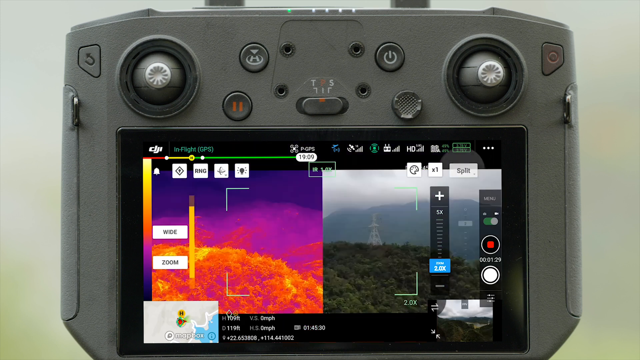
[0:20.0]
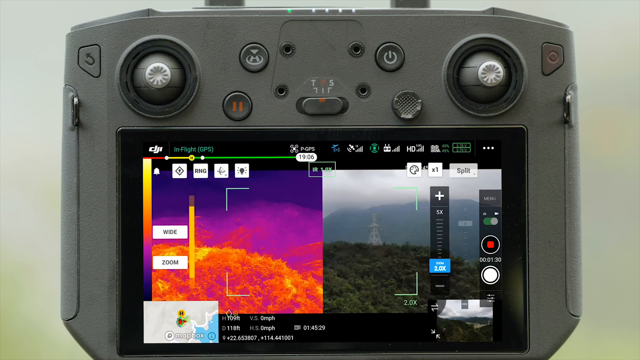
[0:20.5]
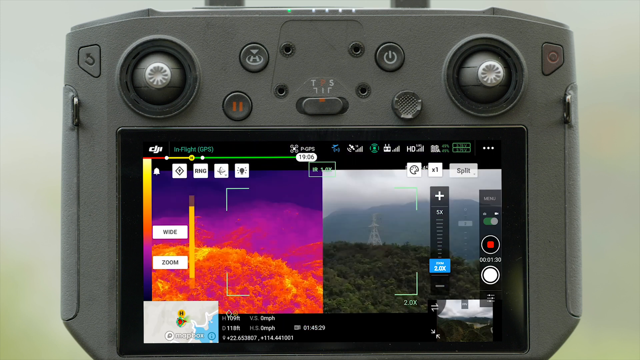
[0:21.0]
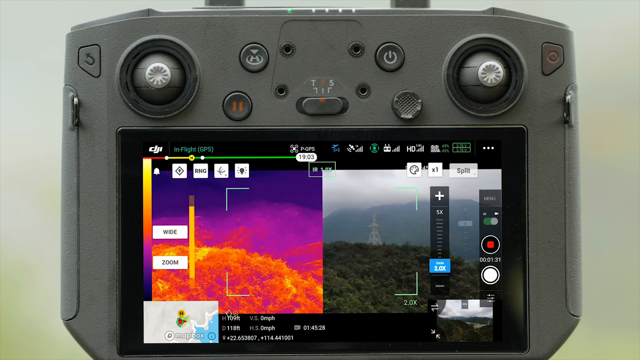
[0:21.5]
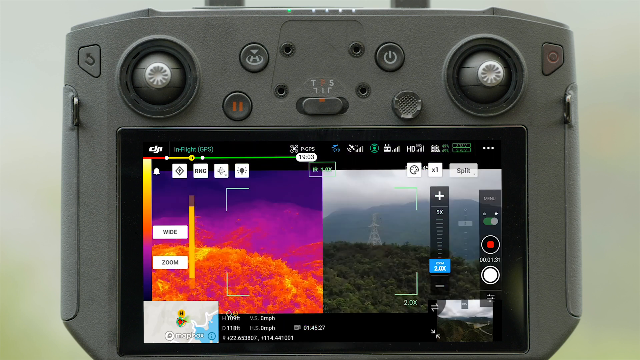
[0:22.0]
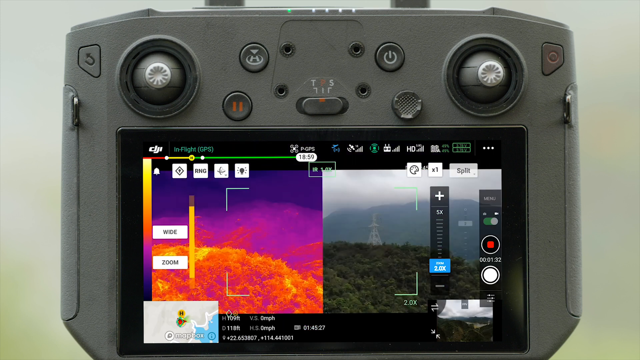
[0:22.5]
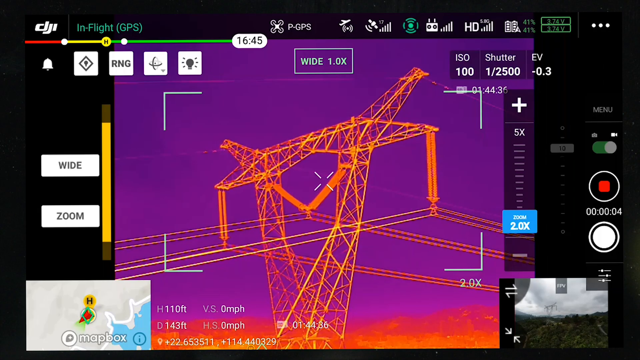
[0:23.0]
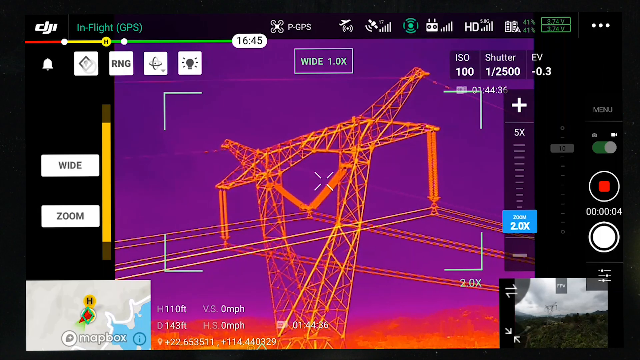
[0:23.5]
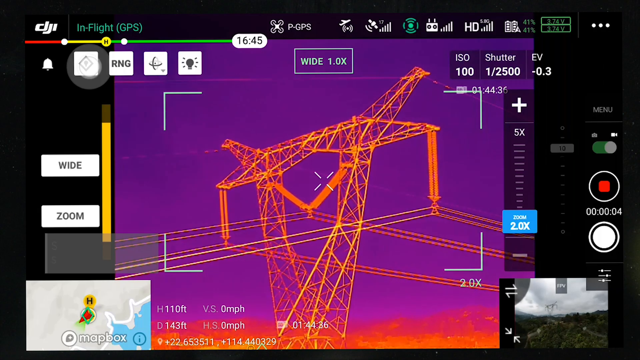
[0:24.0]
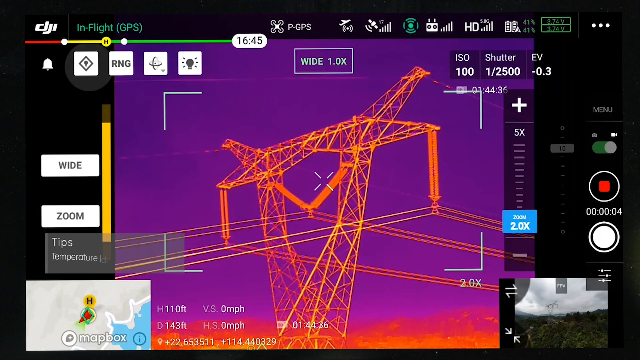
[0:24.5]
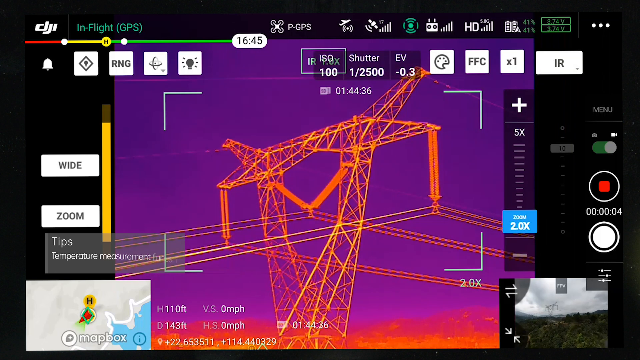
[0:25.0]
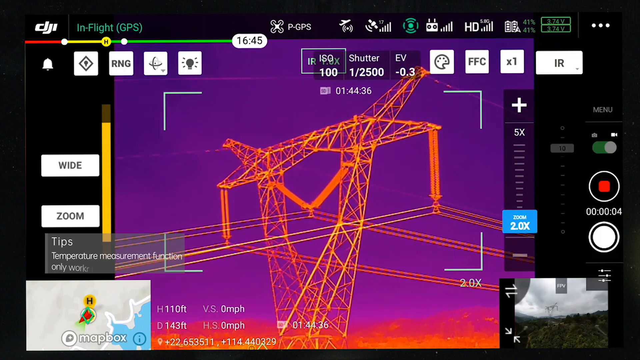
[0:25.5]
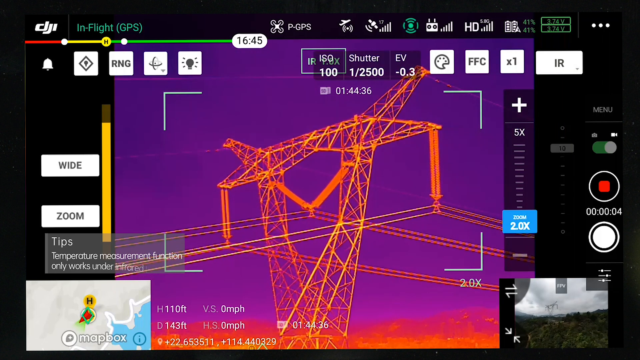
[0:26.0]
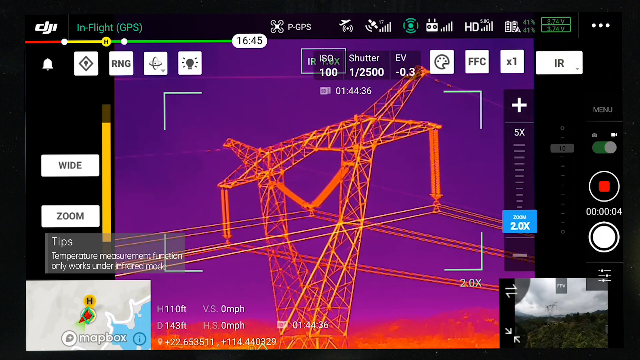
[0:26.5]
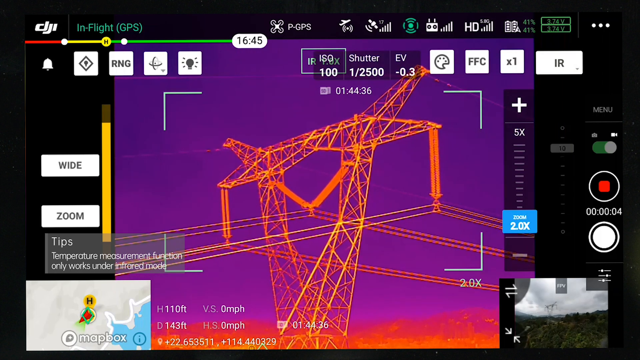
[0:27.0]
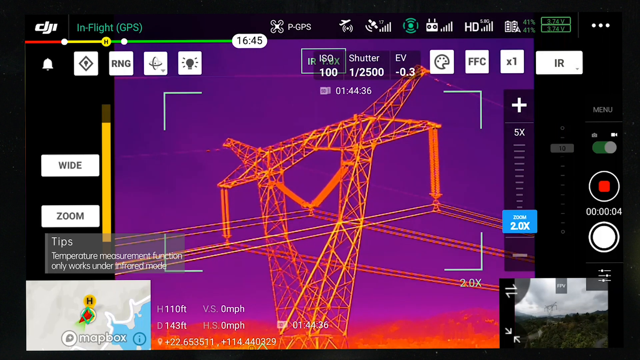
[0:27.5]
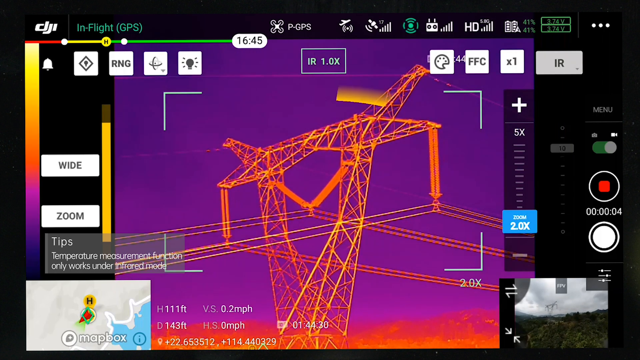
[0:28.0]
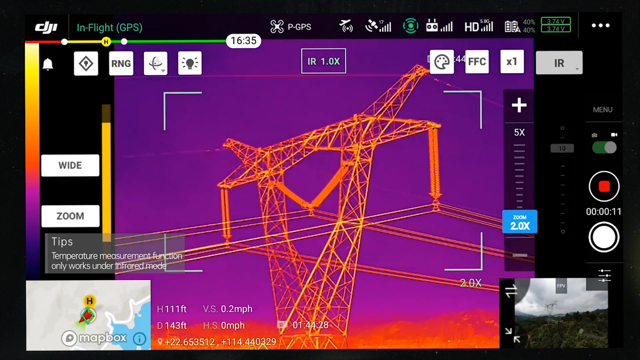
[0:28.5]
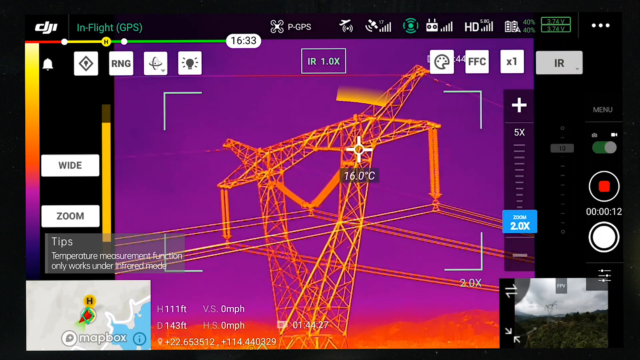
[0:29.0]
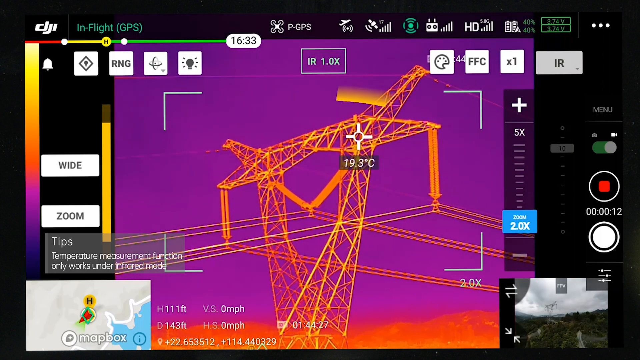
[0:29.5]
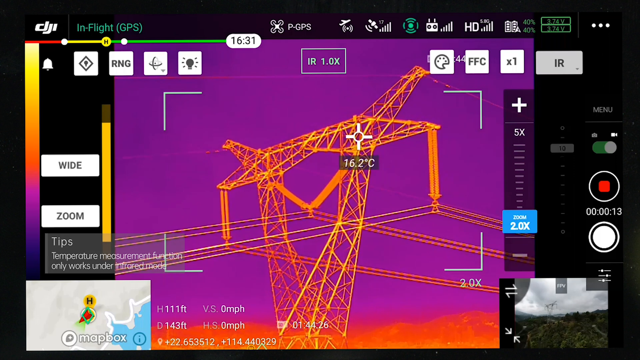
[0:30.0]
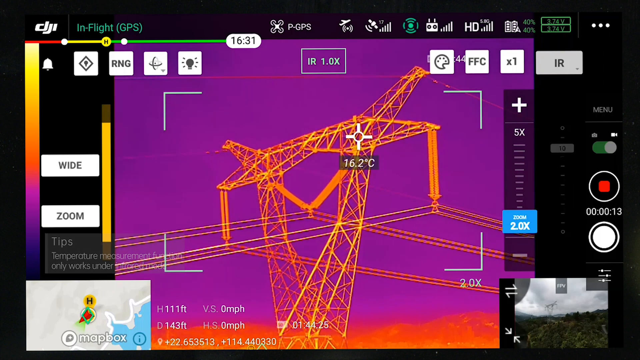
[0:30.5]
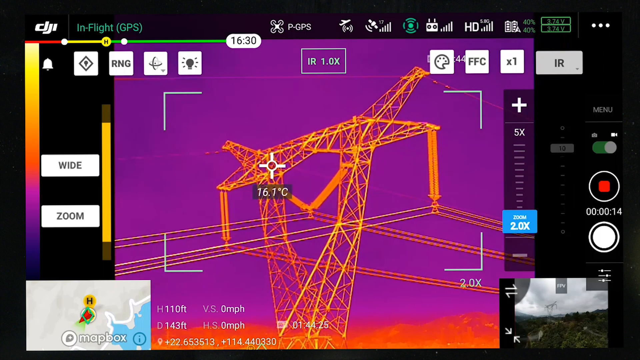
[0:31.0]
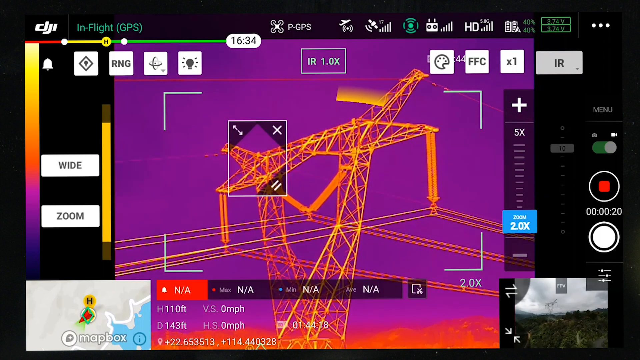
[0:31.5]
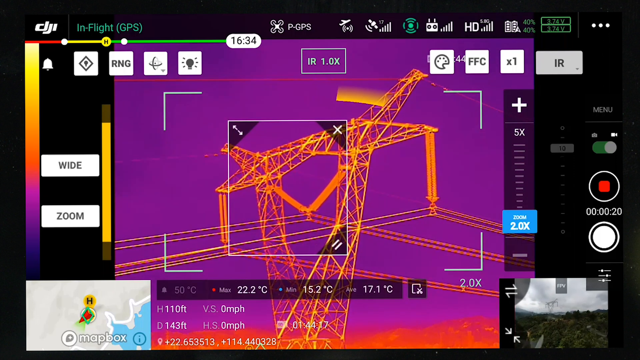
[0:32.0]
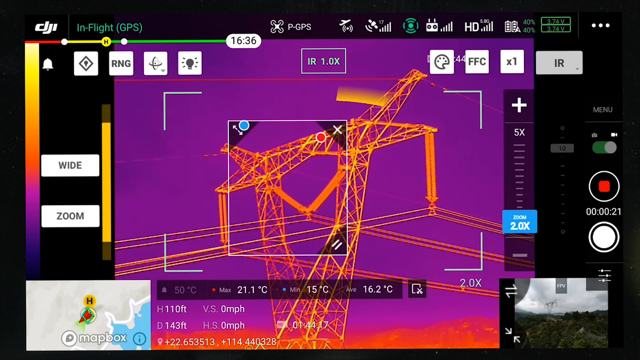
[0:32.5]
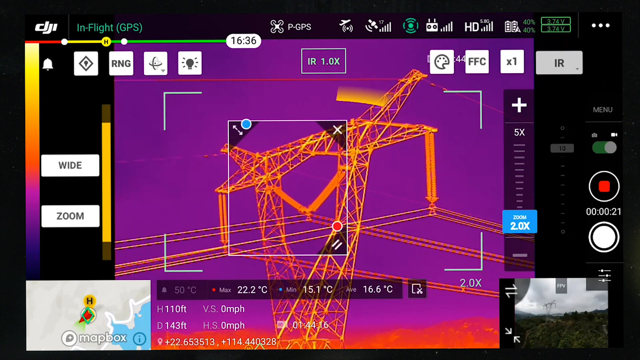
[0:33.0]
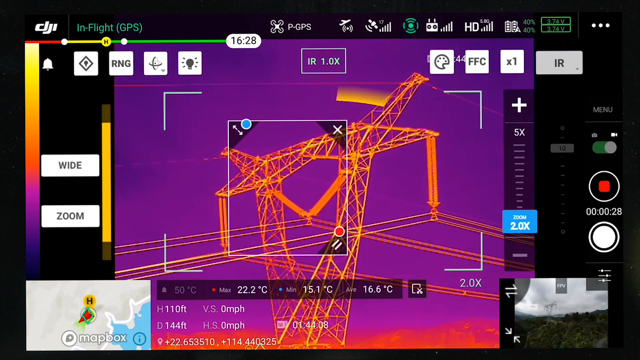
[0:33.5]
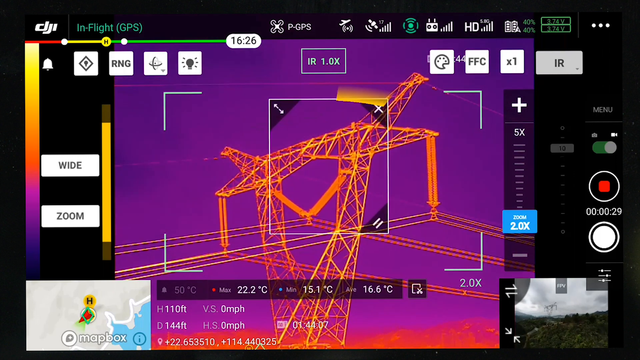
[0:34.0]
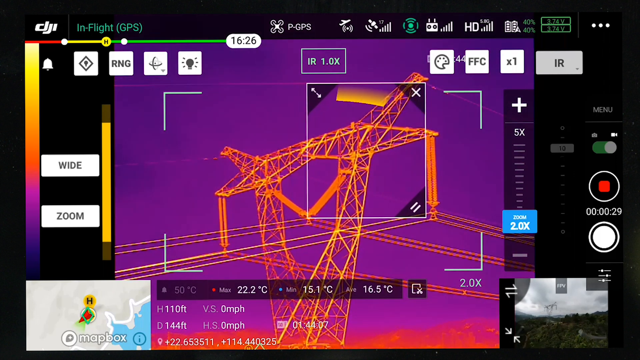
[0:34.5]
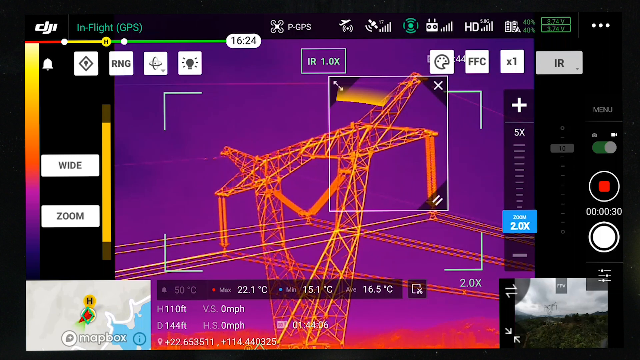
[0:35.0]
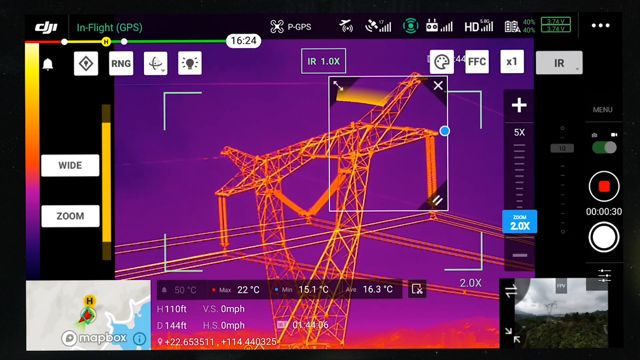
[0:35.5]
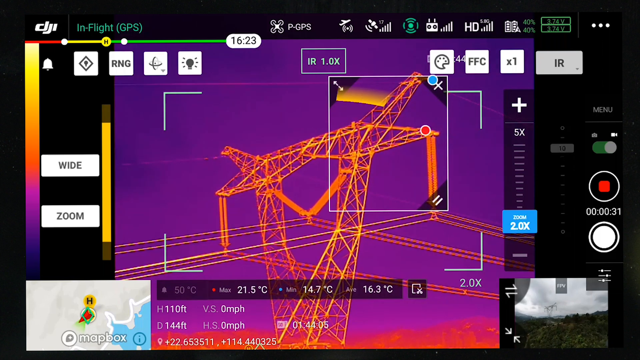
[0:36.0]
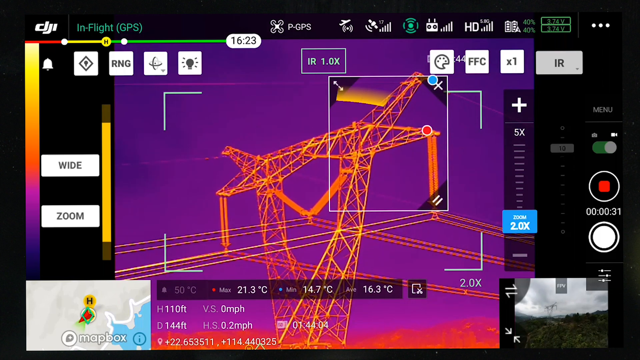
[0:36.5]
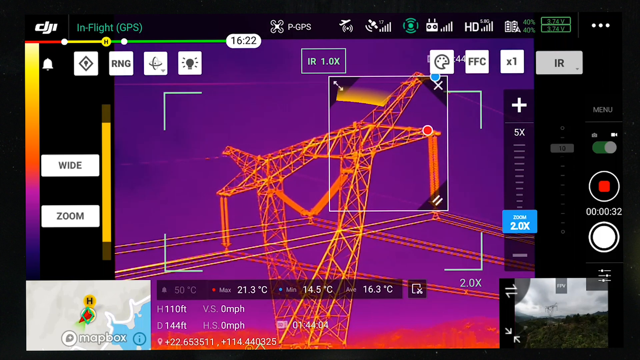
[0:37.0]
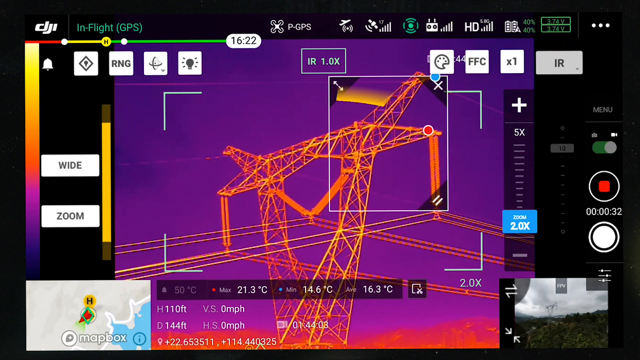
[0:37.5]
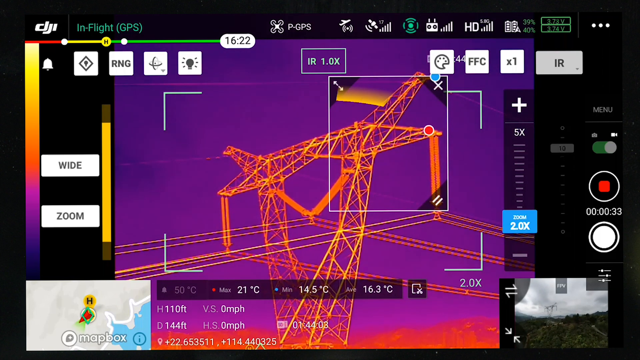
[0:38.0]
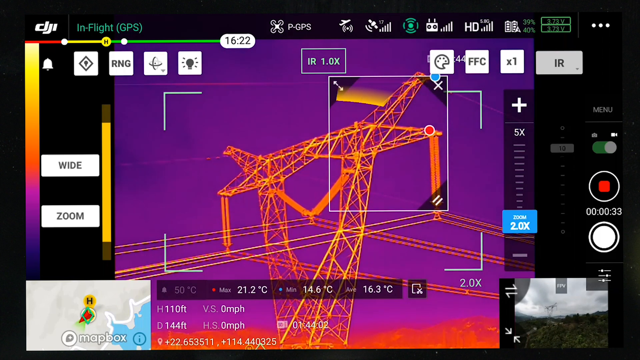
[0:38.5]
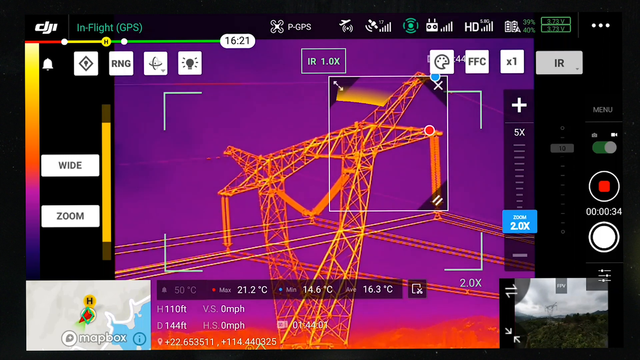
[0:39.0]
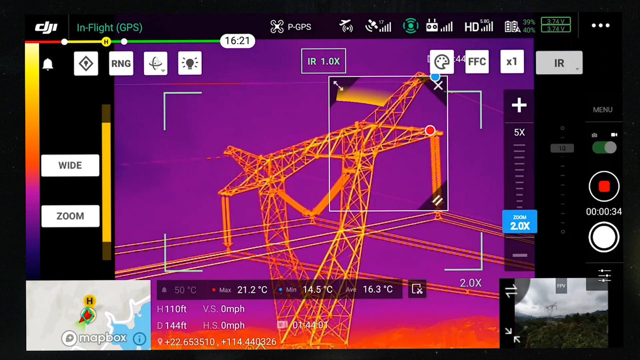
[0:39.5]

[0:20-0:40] The remote control's screen shows two modes: the normal view from the drone's camera on the right and heatmap mode on the left. The drone's screen view then fills the video. It shows the top of a pylon, with purple hues of the sky in the background and oranges at the bottom; the pylon itself is bright orange, and all the power cables can be seen coming through. The operator clicks and drags a box across the image around the pylon. At the top left the display reads "DJI in-flight GPS", at the top center it reads "P-GPS", and there are six icons showing different information about the drone. Below that at the top, from left to right, are a picture of a bell and four white squares of information; on the right-hand side are three white squares and one grey oblong. On the left, in the center, are "wide" in a white box and "zoom" in a white box. Below that is a small map of the drone's geographical location. At the bottom right is an image of the view of the drone itself. The drone has zoomed in on the pylon, which is visible in the center of the screen.